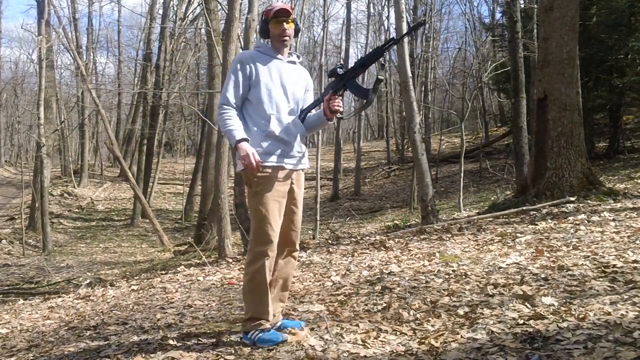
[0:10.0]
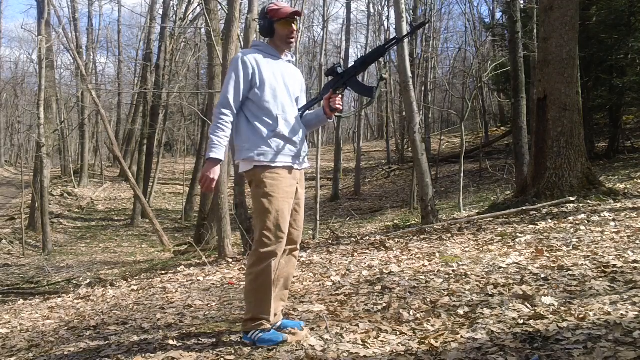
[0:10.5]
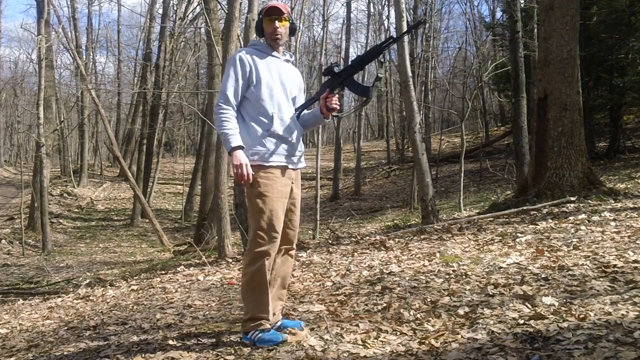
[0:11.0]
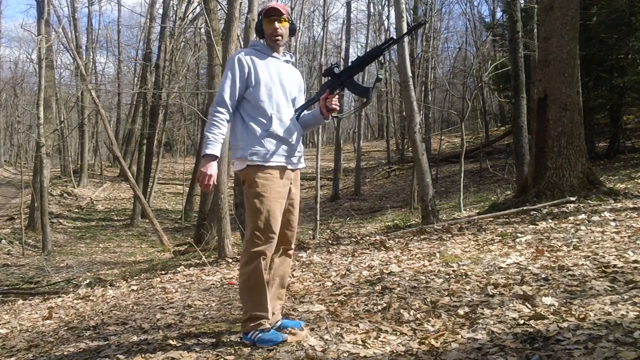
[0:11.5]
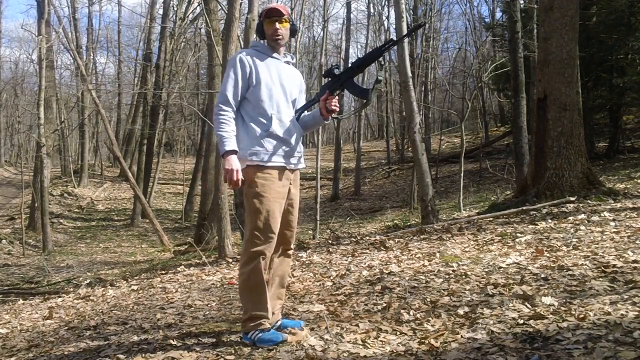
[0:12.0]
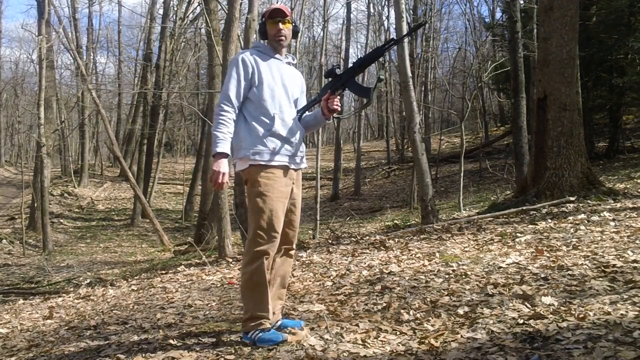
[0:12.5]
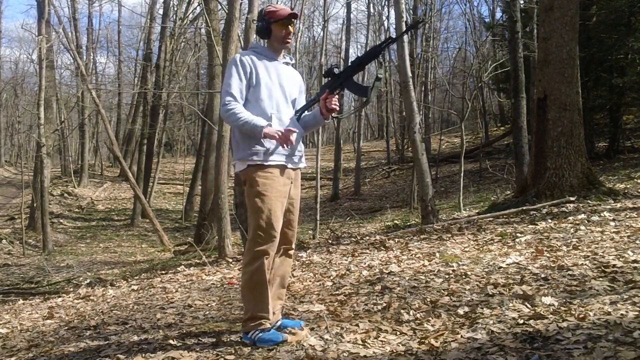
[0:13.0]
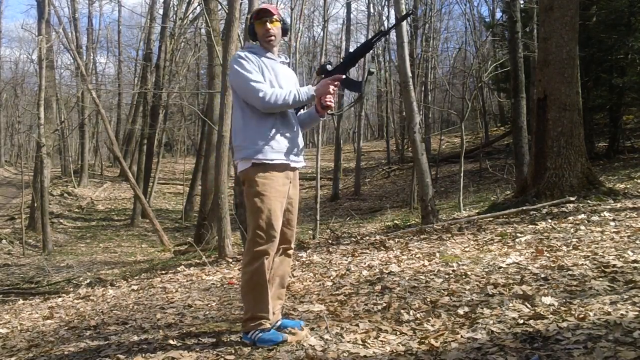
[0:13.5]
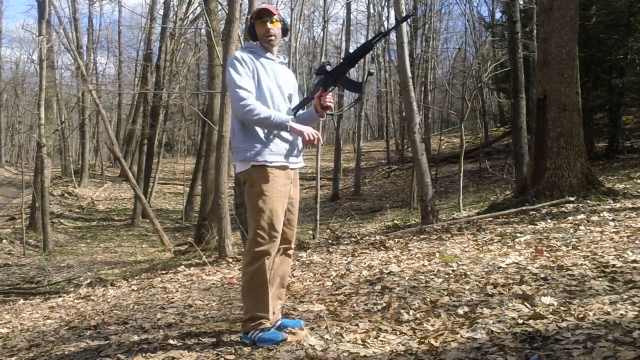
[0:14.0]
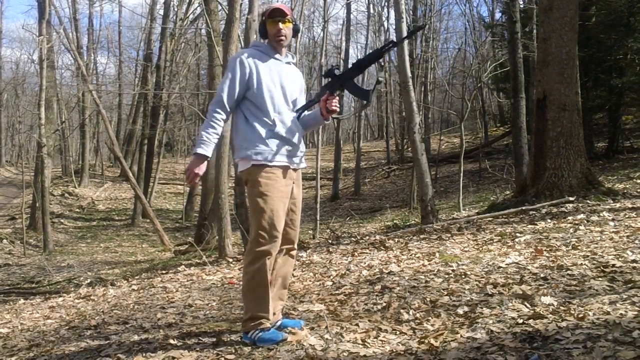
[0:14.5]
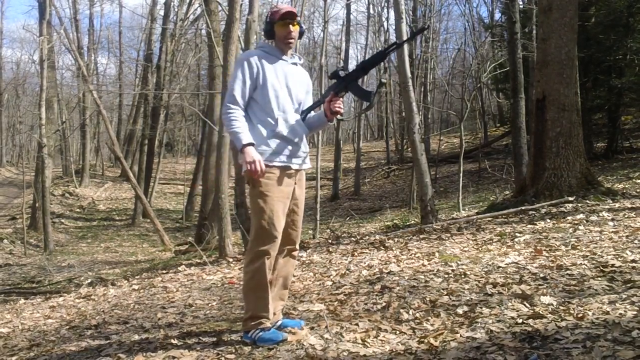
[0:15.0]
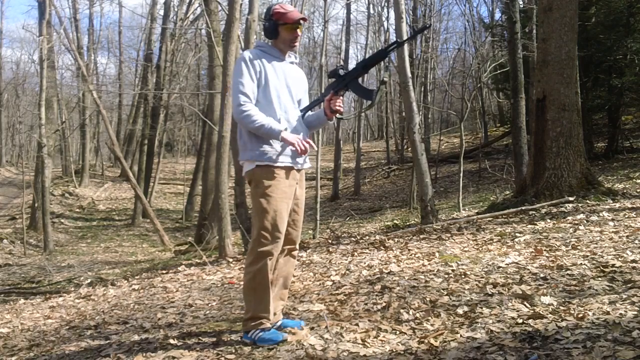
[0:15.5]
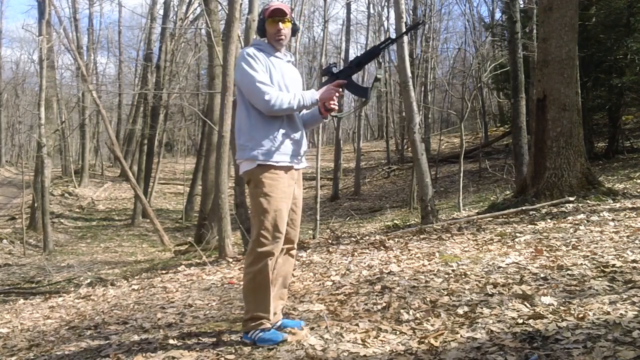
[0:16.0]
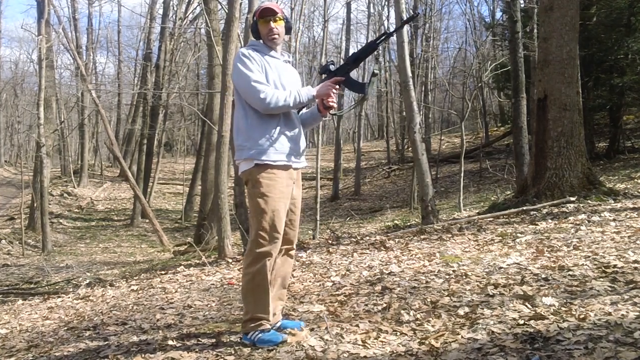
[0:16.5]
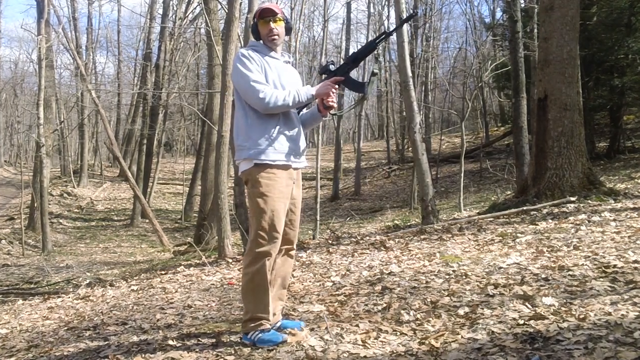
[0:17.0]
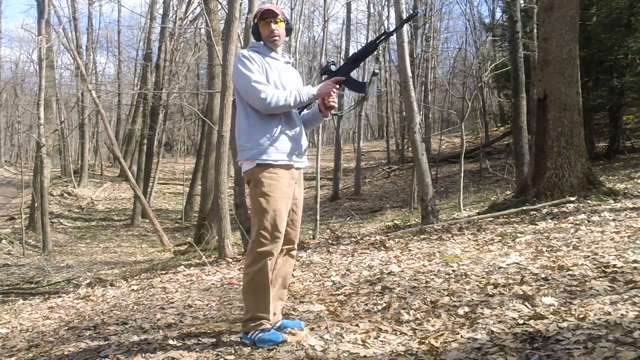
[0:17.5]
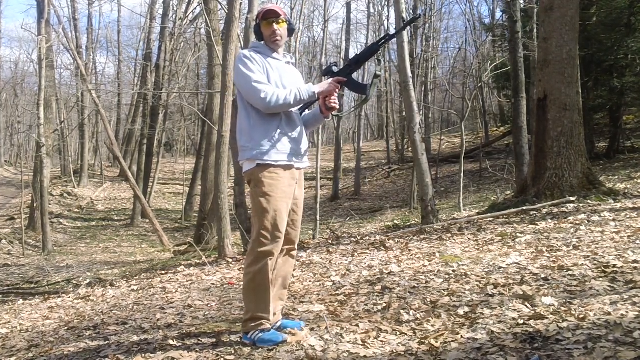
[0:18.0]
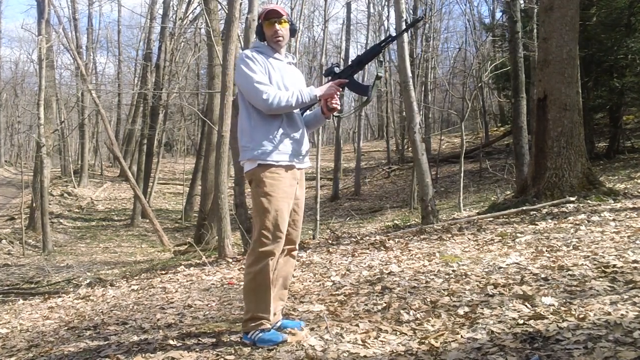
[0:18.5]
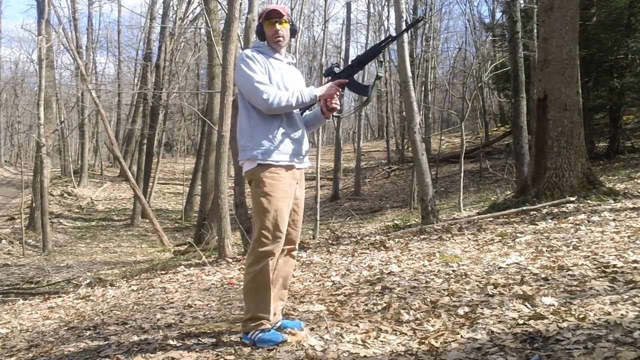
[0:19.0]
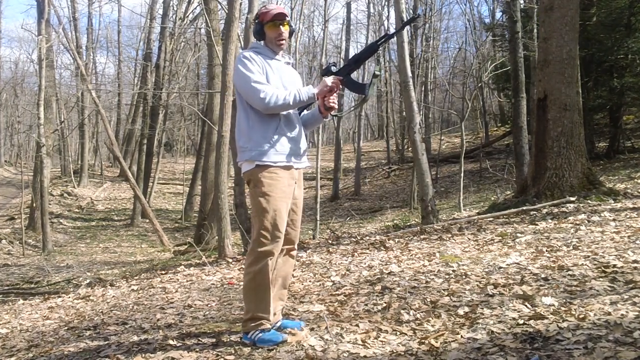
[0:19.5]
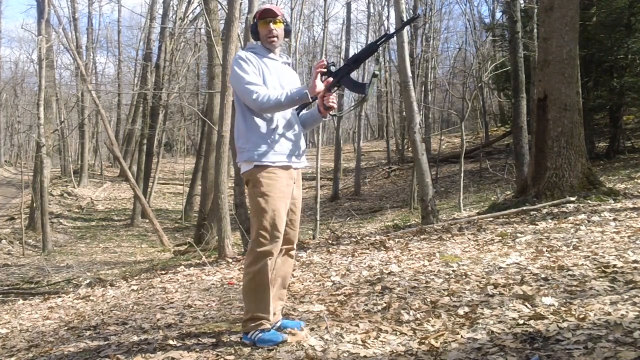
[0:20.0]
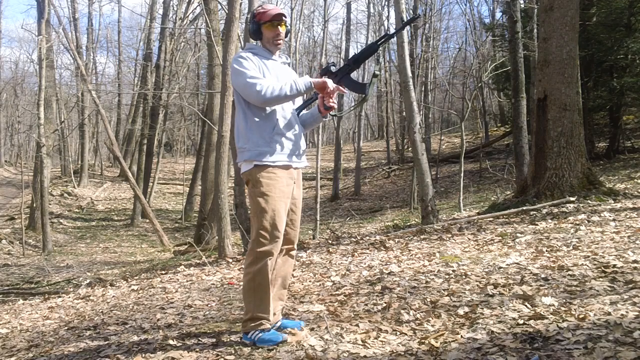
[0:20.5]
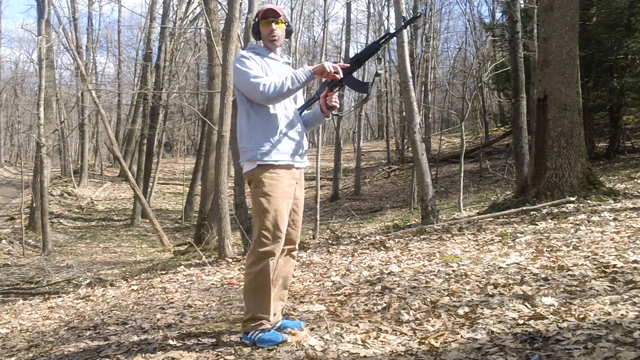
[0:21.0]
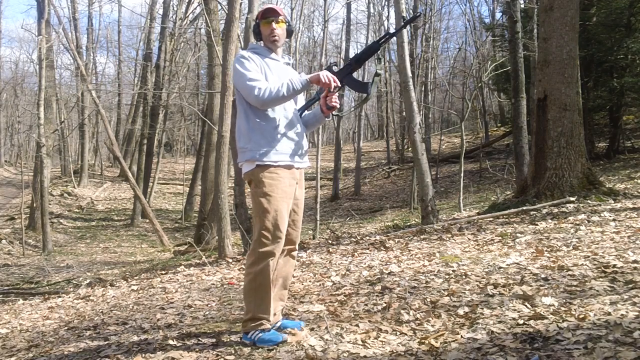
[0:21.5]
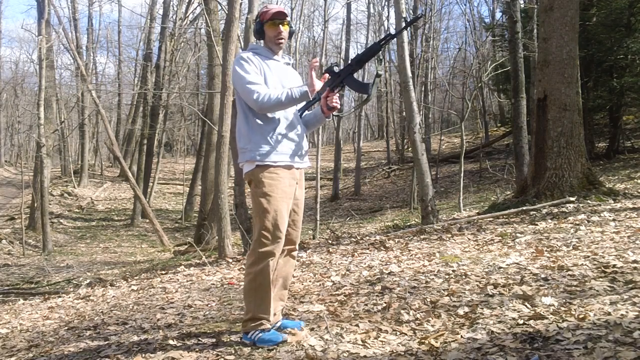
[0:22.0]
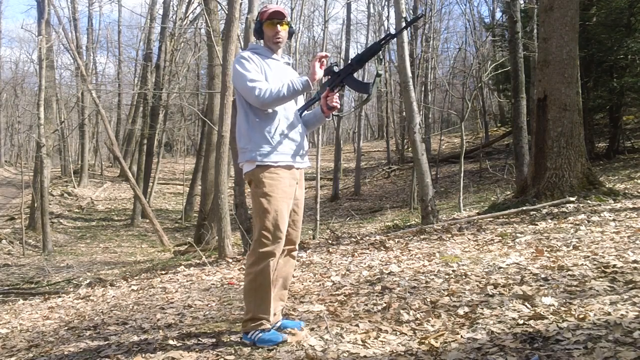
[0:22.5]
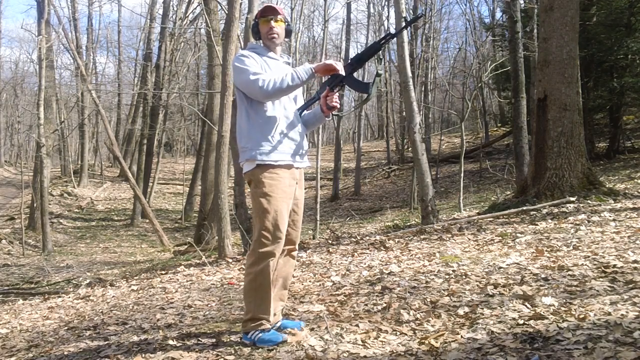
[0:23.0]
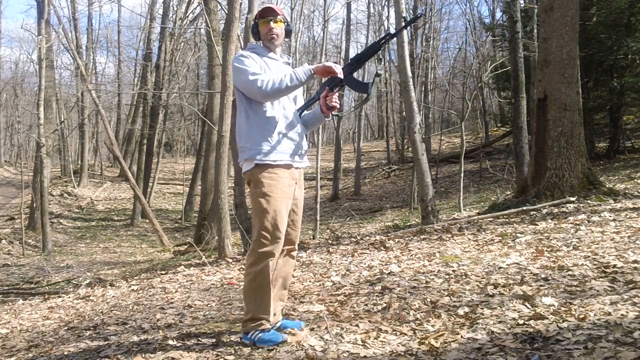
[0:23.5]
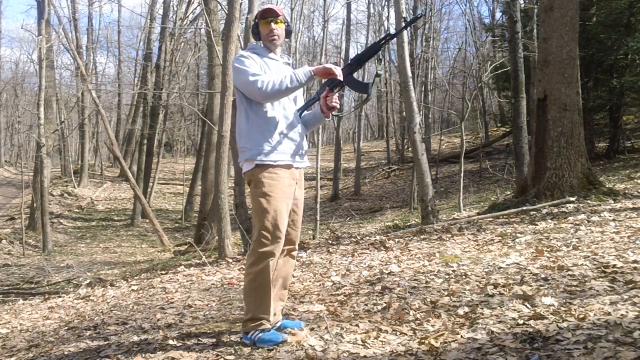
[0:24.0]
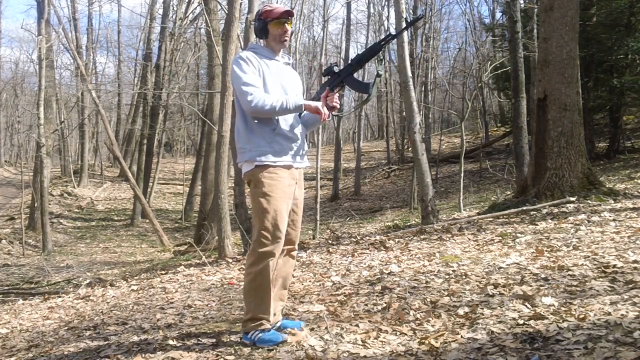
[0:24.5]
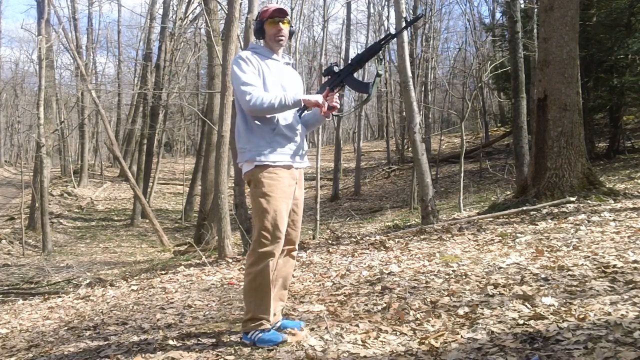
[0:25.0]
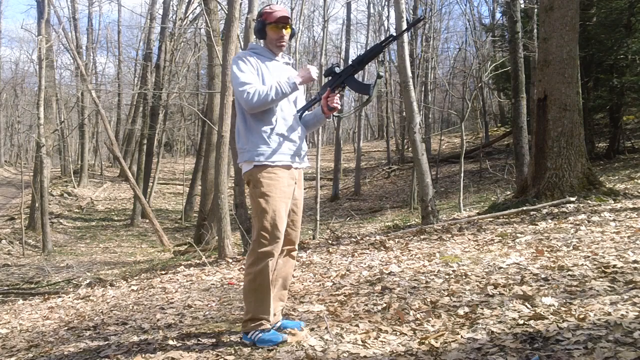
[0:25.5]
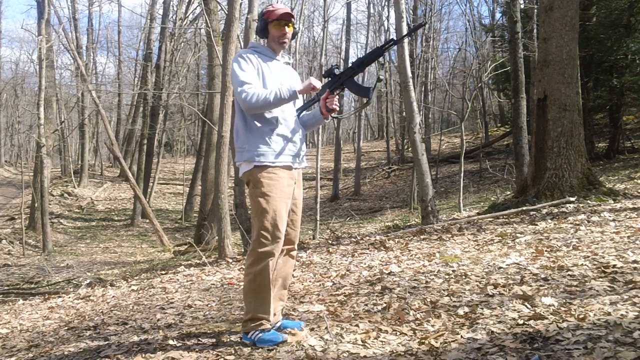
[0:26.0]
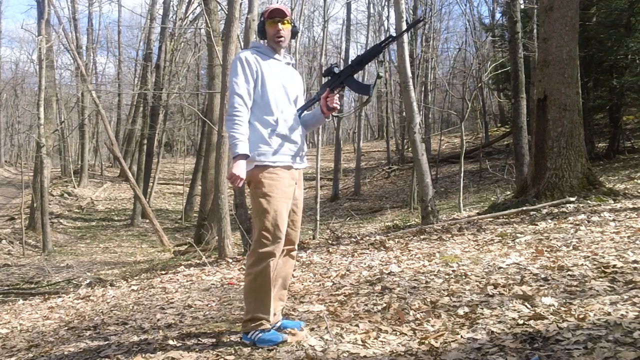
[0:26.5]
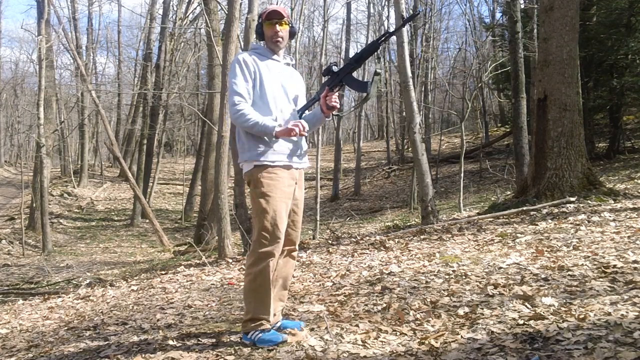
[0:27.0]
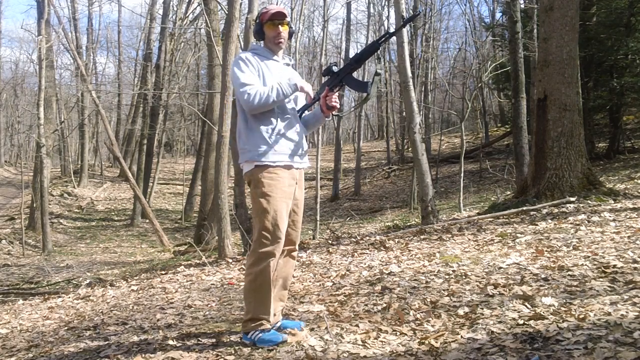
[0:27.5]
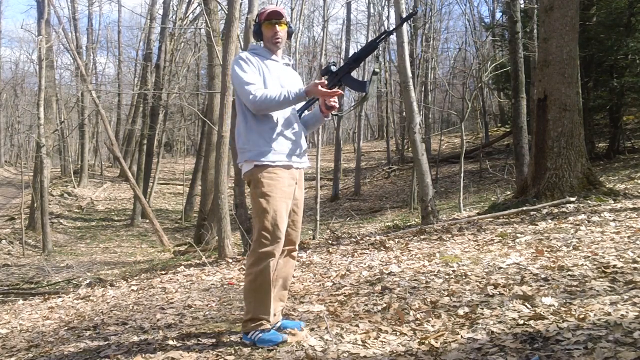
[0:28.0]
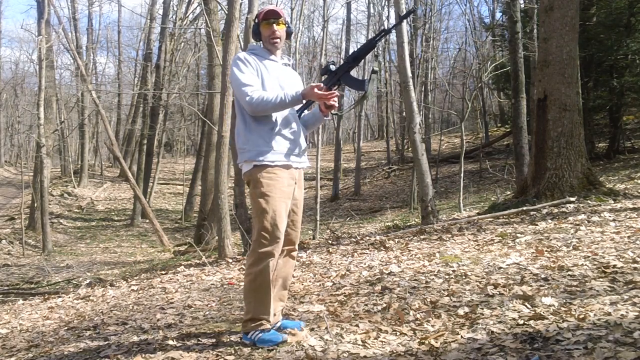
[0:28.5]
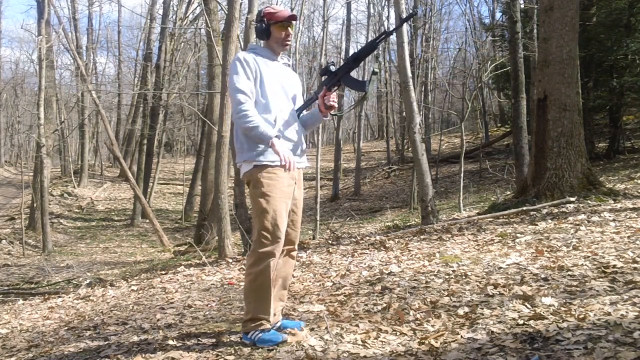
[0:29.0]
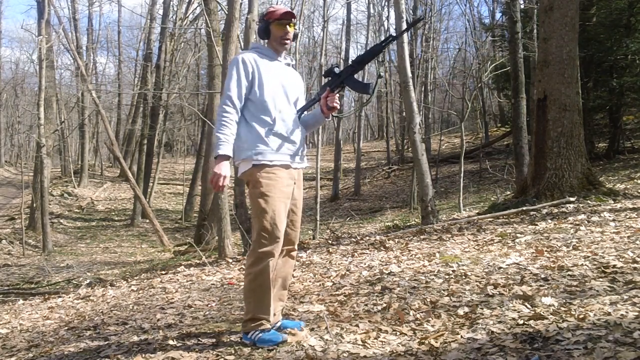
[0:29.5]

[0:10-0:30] The man continues holding the gun. He is white and wears brown or khaki pants, a grey jersey and a red cap. He points to different parts of the gun and gestures with his hands as he explains. He is clearly out in the wild alone. In the background the woods have smaller, thinner trees, and it is daylight with a blue sky and white clouds. He shows where the bullets are stored. The gun has a belt for carrying it. His ears are covered with headsets of the kind used when shooting.